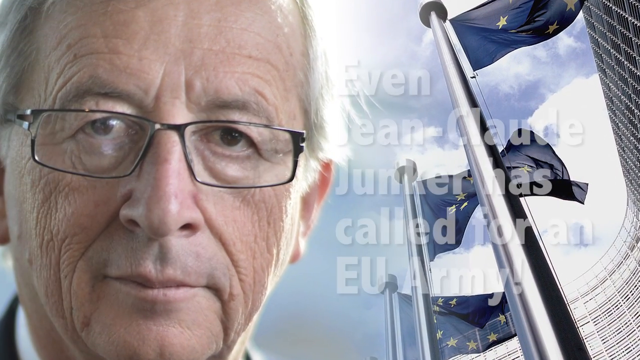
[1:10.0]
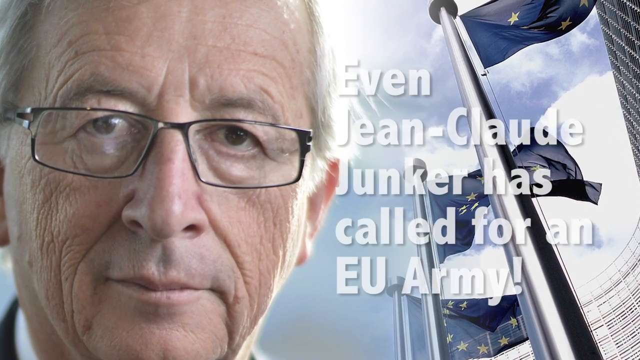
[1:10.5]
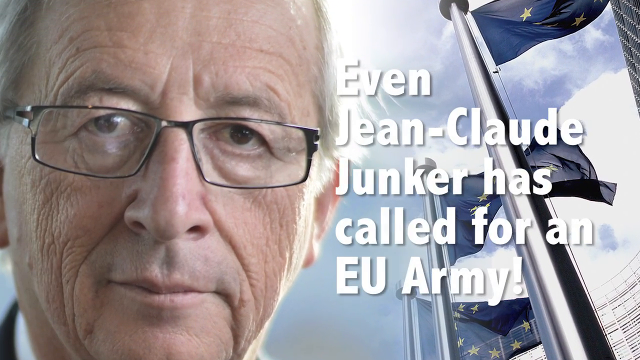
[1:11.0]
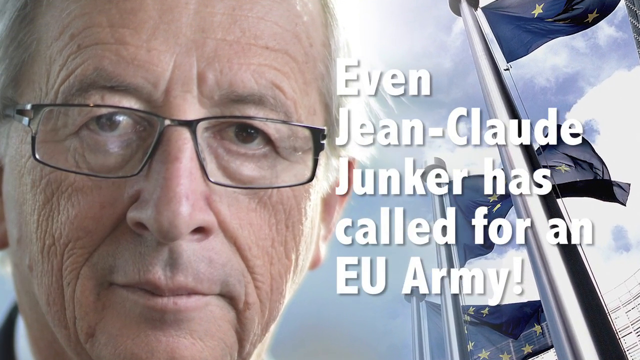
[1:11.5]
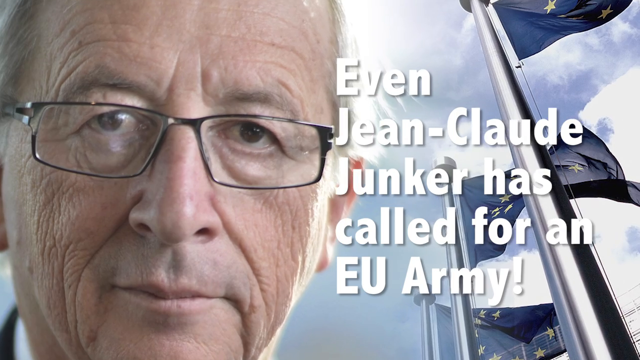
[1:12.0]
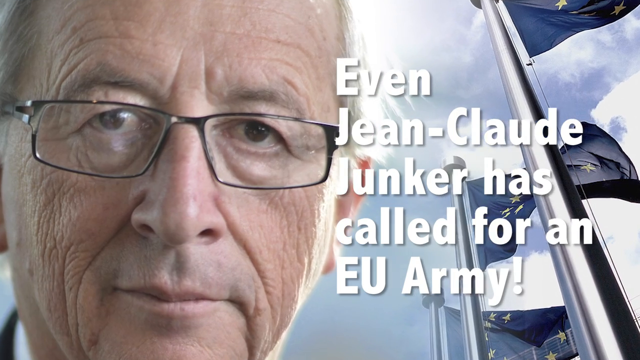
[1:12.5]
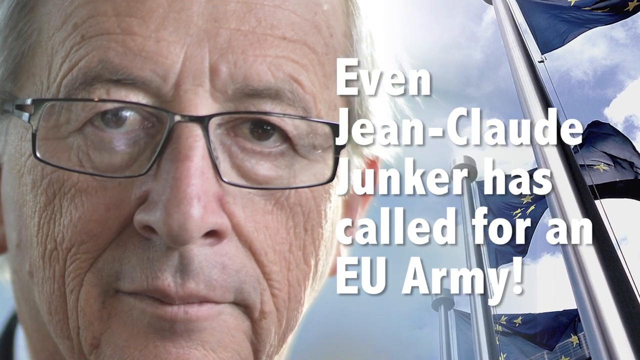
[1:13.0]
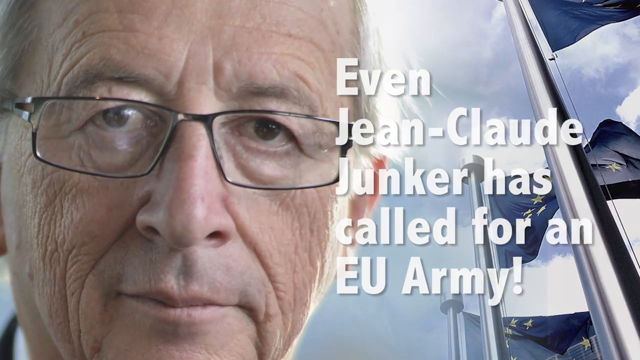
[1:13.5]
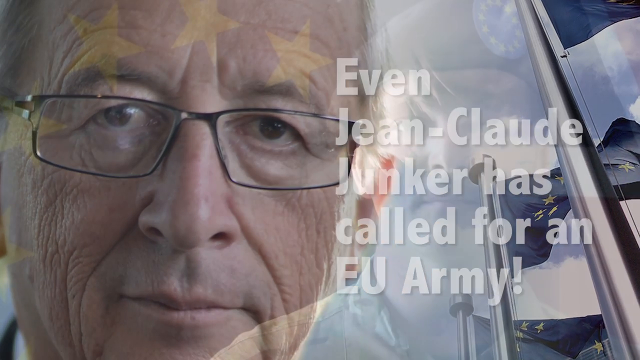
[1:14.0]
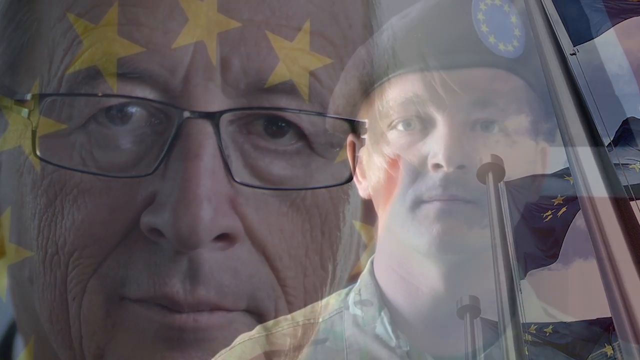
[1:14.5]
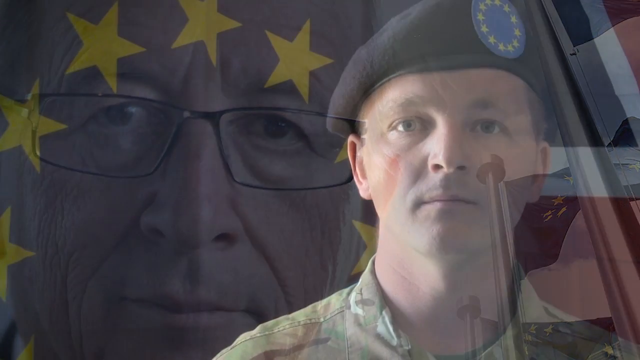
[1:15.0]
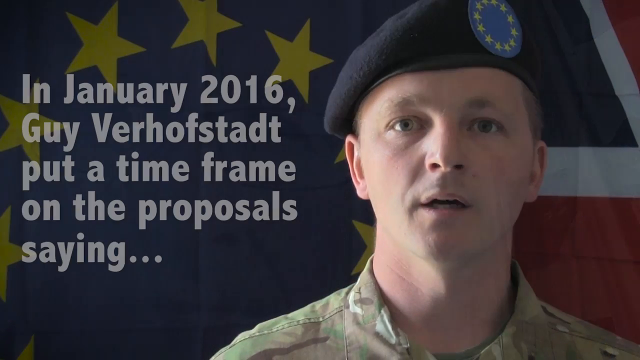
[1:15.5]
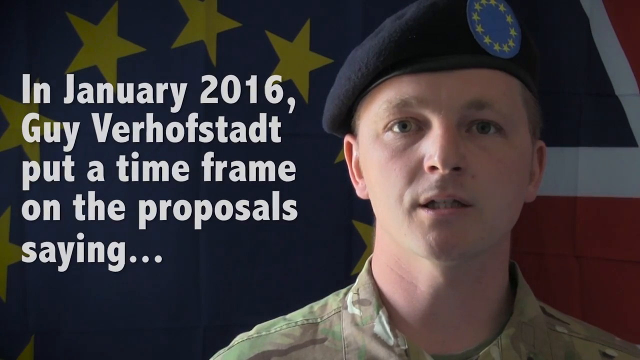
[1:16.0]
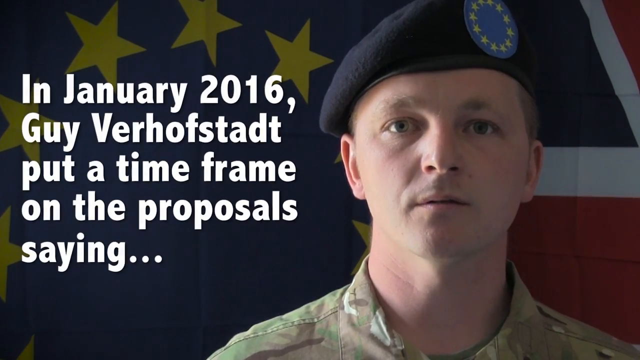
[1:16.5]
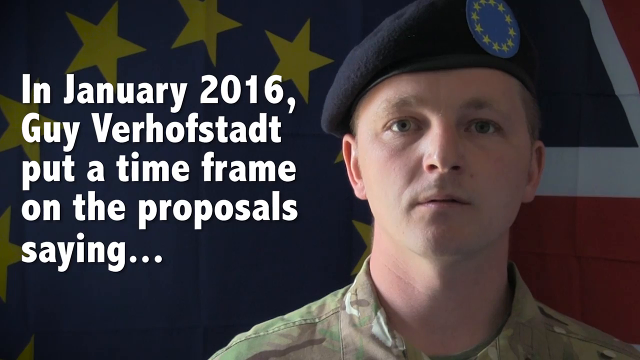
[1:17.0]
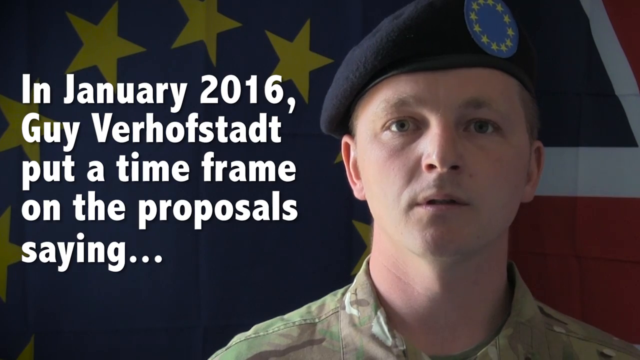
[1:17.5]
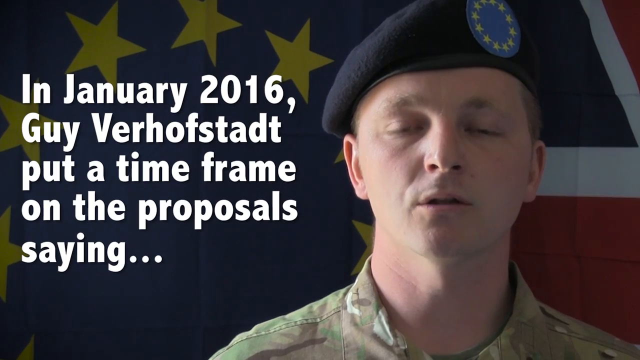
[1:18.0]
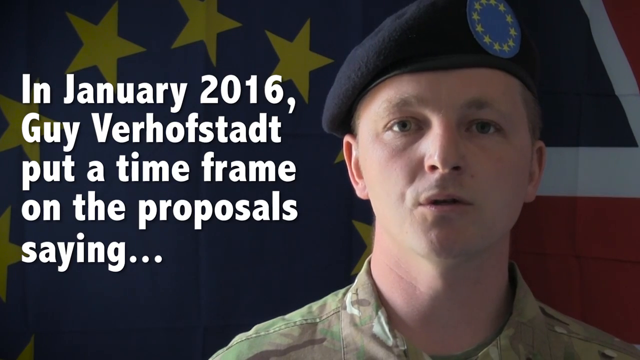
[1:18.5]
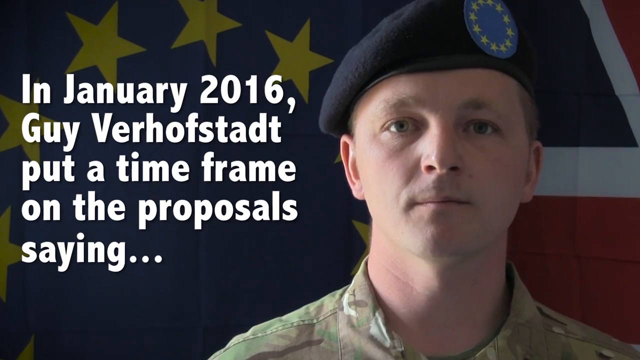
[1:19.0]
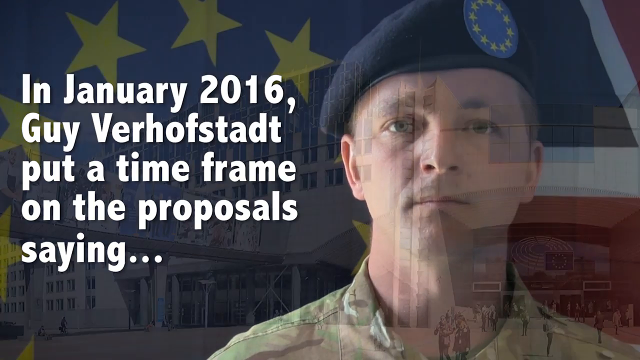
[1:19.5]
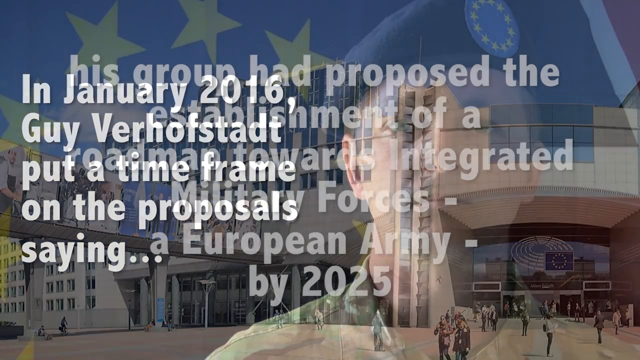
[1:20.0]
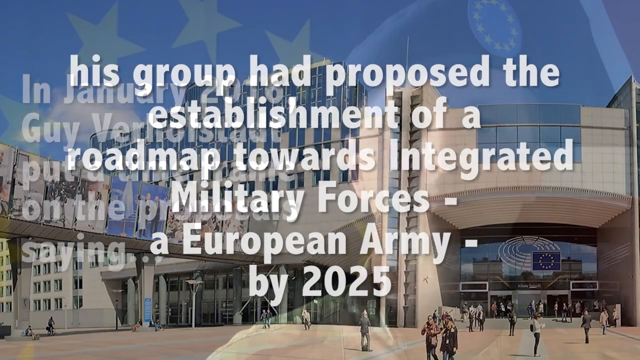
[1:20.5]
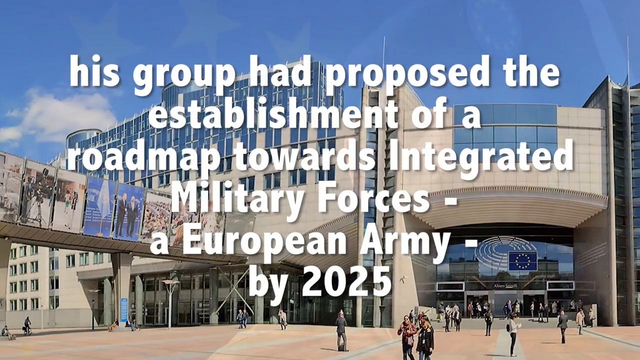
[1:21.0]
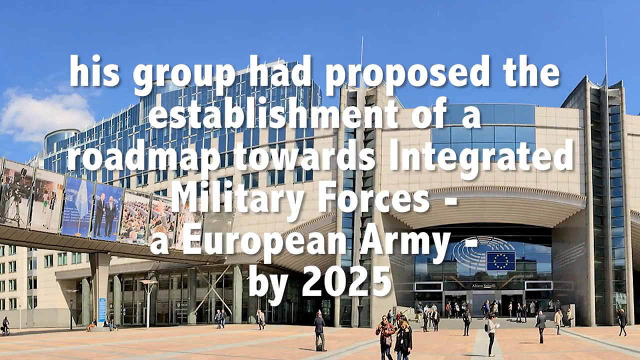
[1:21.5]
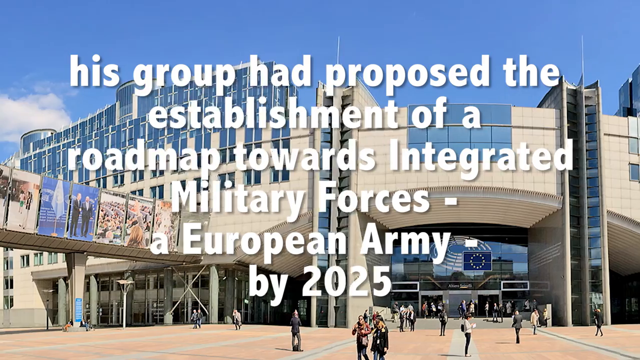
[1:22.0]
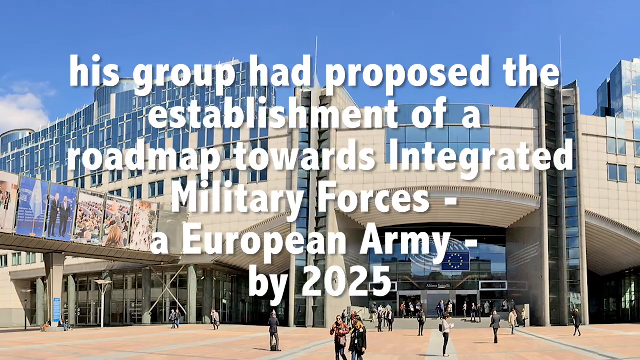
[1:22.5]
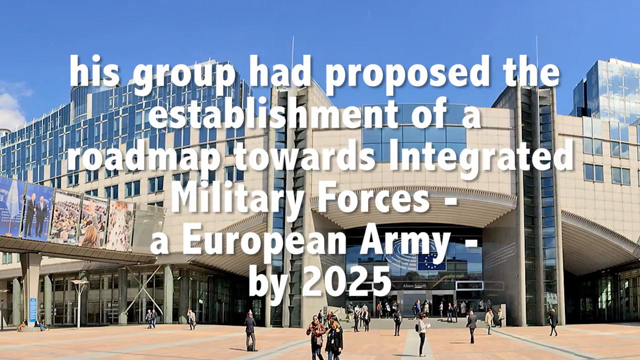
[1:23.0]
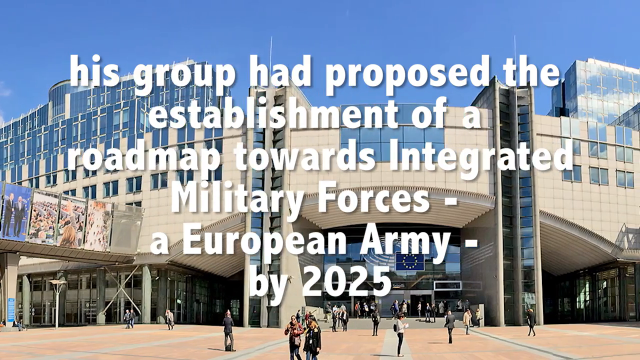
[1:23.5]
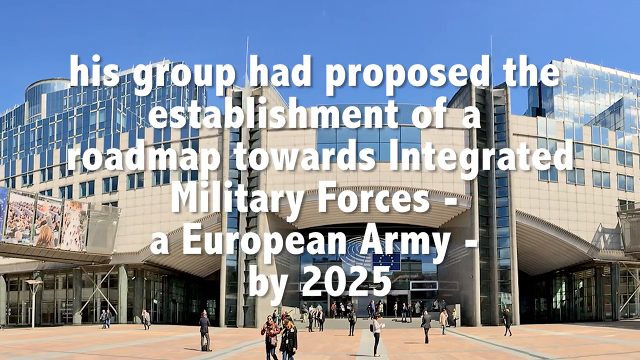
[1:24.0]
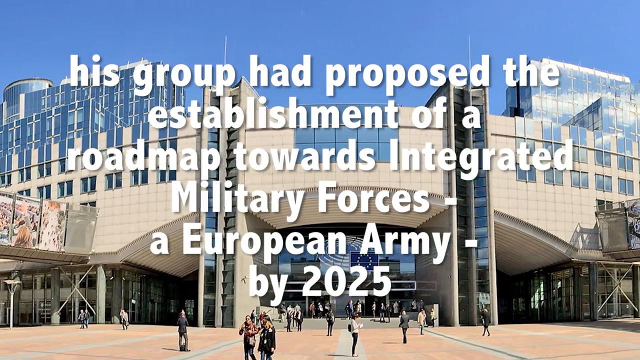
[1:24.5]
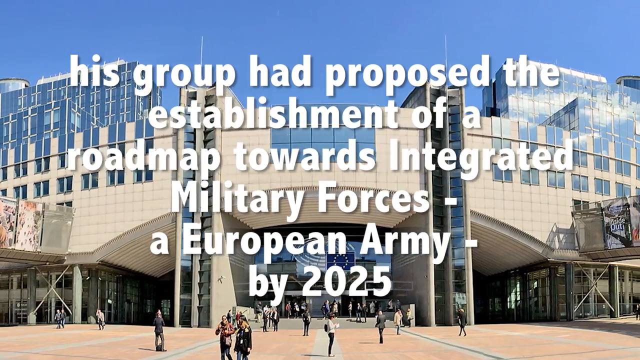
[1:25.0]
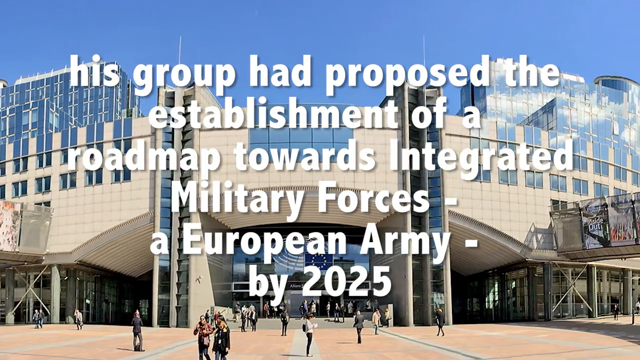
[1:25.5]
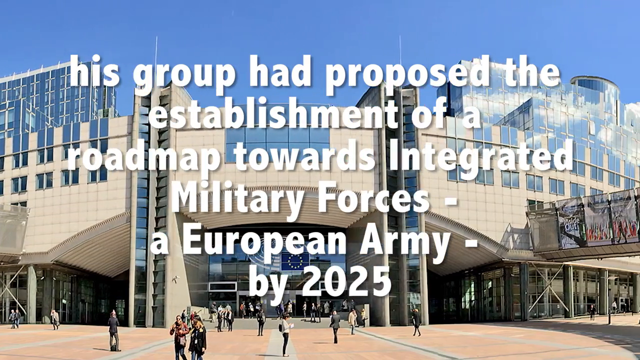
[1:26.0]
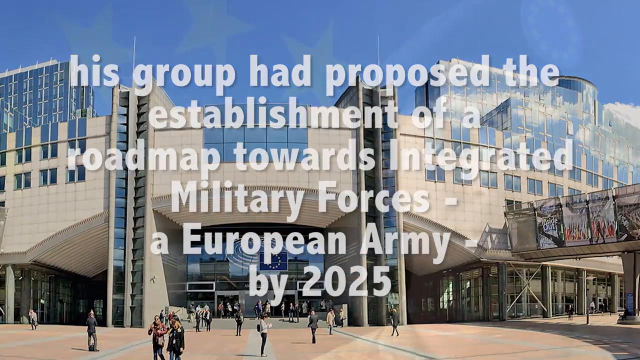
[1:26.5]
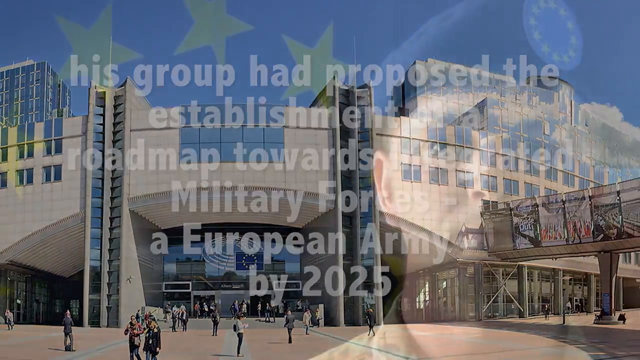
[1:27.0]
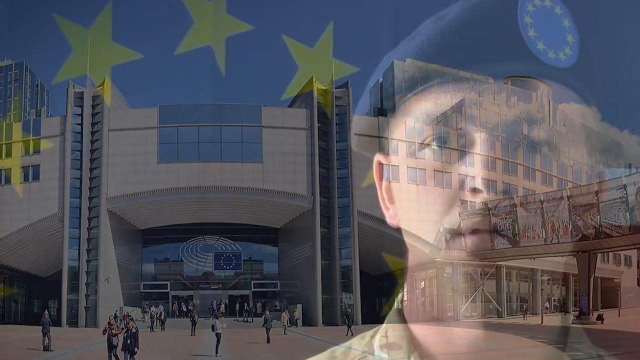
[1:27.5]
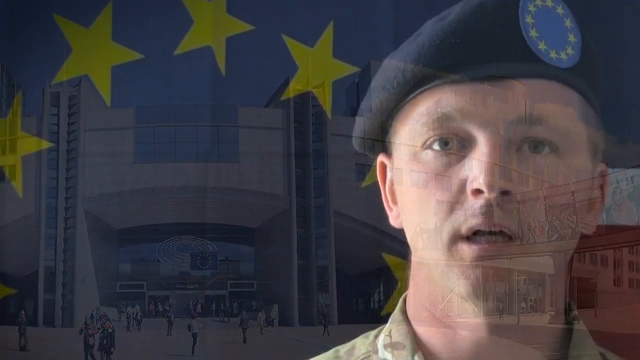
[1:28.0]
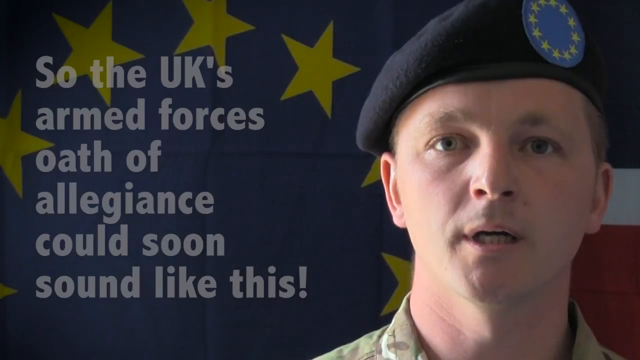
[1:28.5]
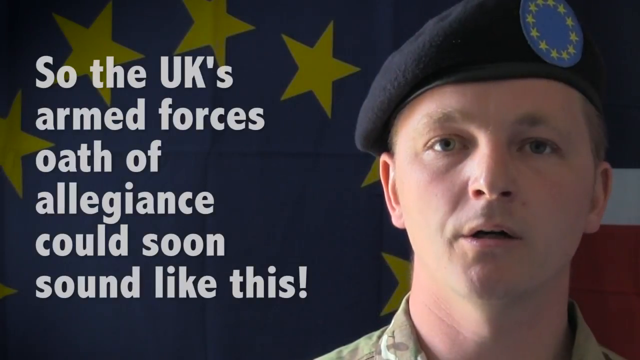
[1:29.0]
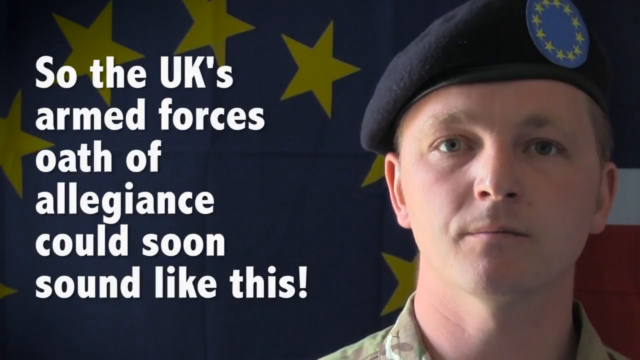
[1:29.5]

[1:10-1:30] The face of an older man wearing black-framed glasses is shown with the words "even Jean-Claude Juncker has called for an EU army". The photo gets closer and closer. Then a soldier appears wearing a black hat with a blue circle of yellow stars, and words on the left side of the screen read "in January 2016, Guy Verhofstadt put a time frame on the proposals, saying his group had proposed the establishment of a roadmap towards integrated military forces, a European army by 2025", against a background of a large building with a lot of windows. The text "so the UK's Armed Forces Oath of Allegiance could soon sound like this" follows. Several flags are visible, as well as a large building with many glass windows and a blue rectangle with a circle of yellow stars.